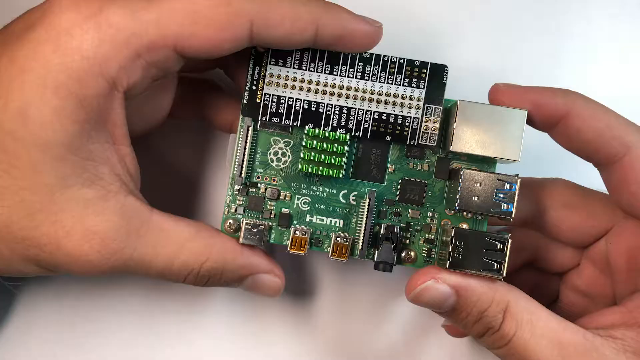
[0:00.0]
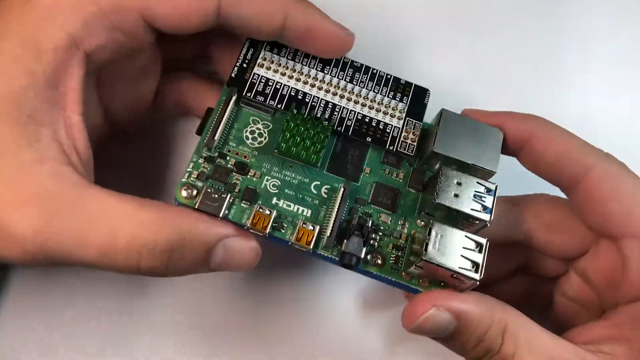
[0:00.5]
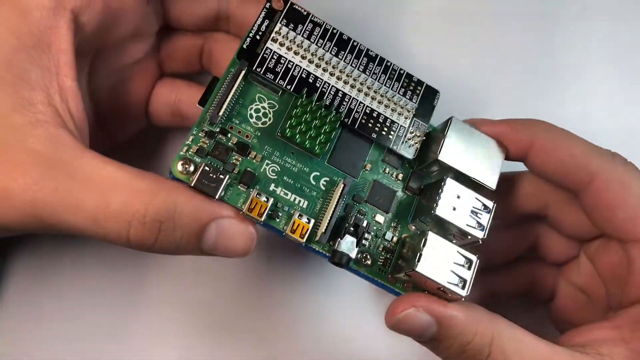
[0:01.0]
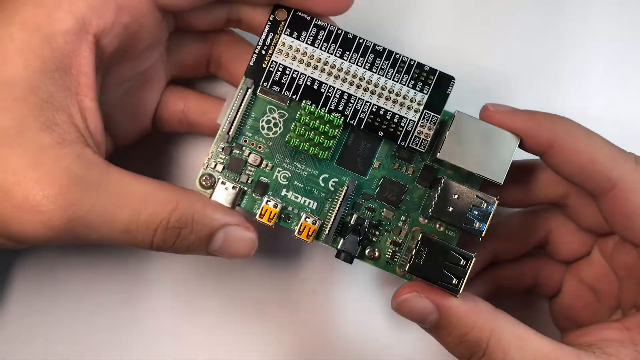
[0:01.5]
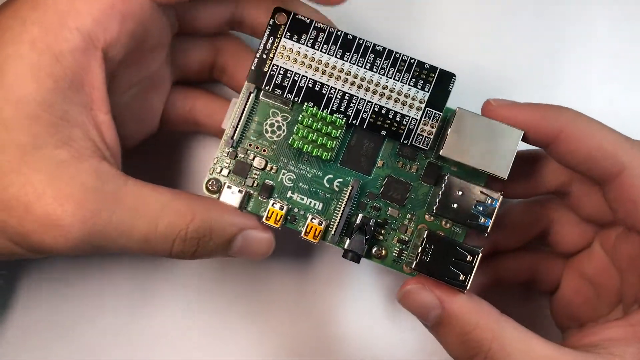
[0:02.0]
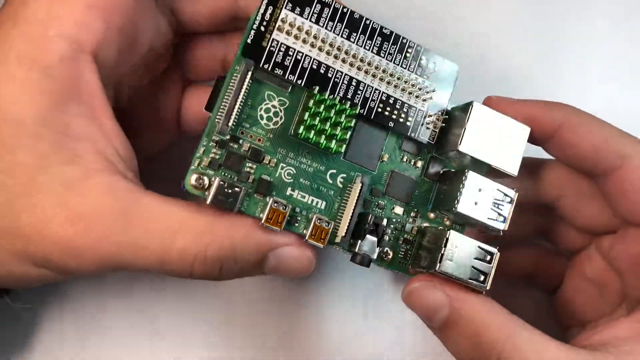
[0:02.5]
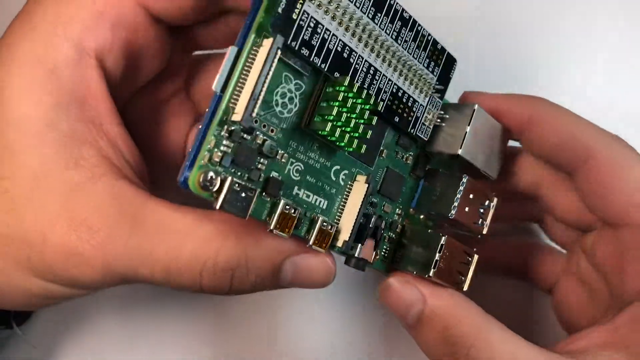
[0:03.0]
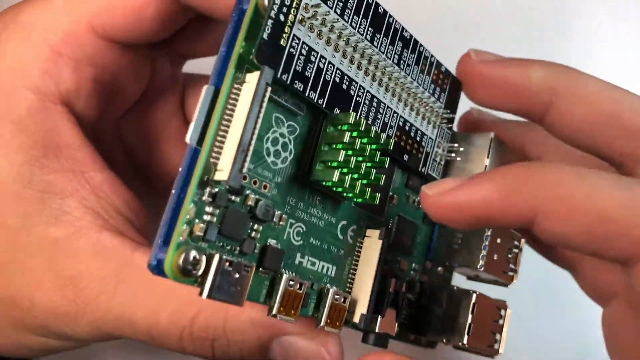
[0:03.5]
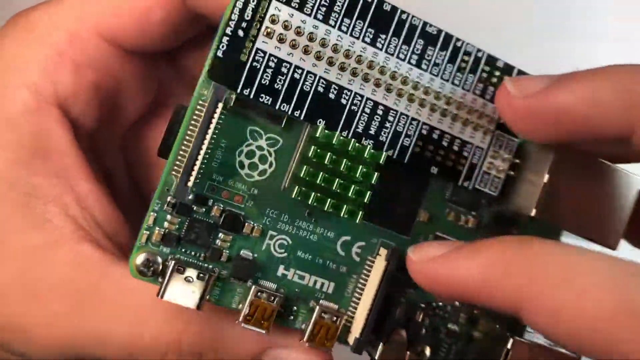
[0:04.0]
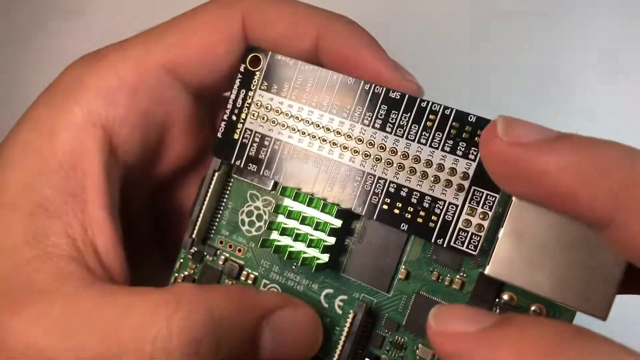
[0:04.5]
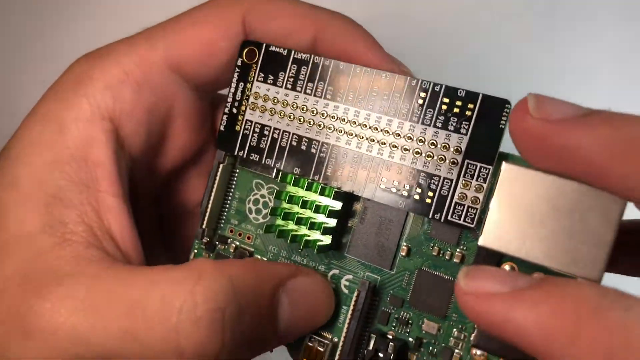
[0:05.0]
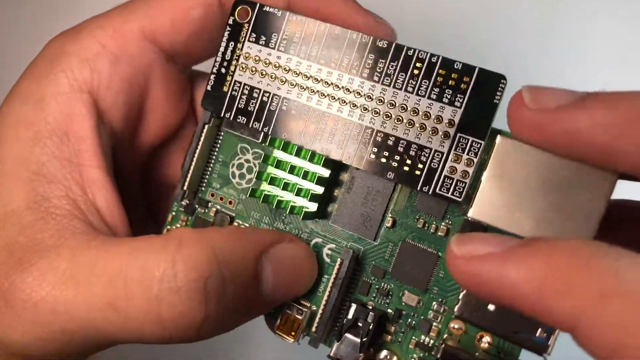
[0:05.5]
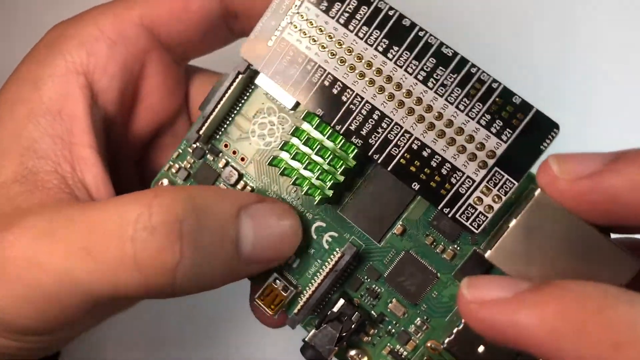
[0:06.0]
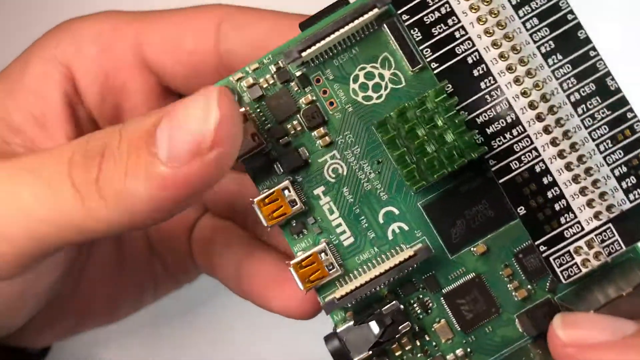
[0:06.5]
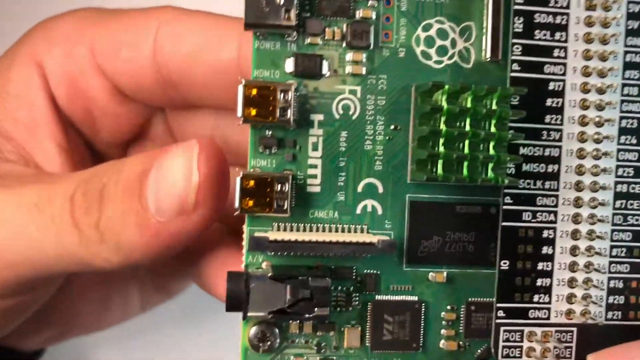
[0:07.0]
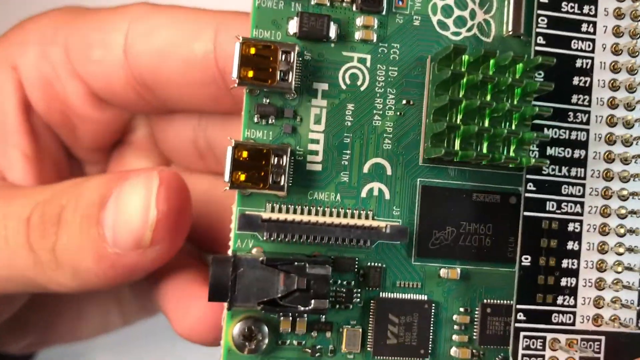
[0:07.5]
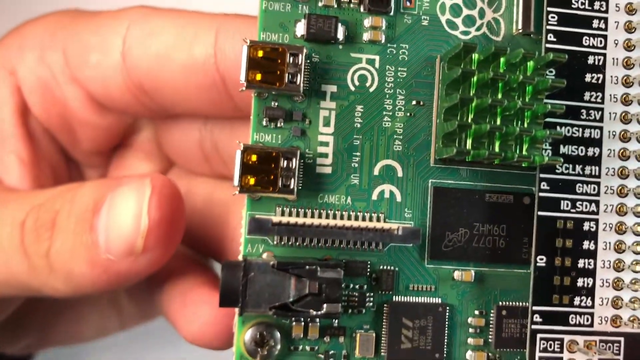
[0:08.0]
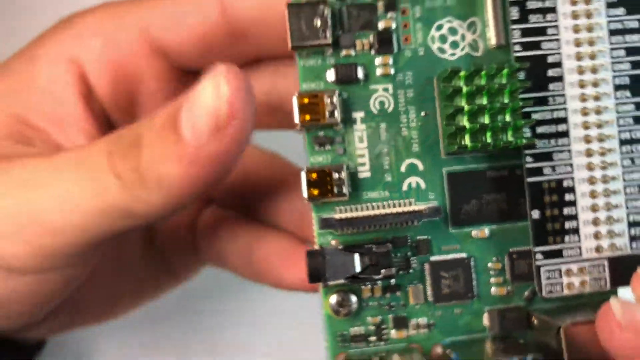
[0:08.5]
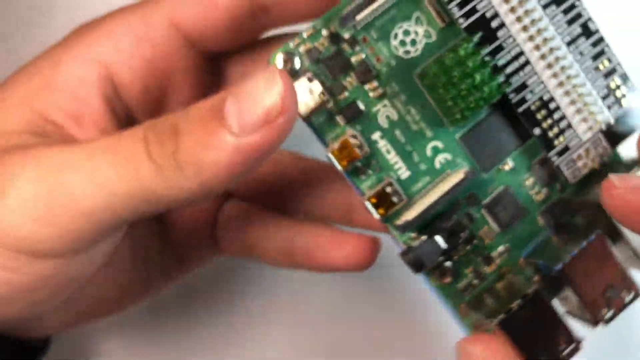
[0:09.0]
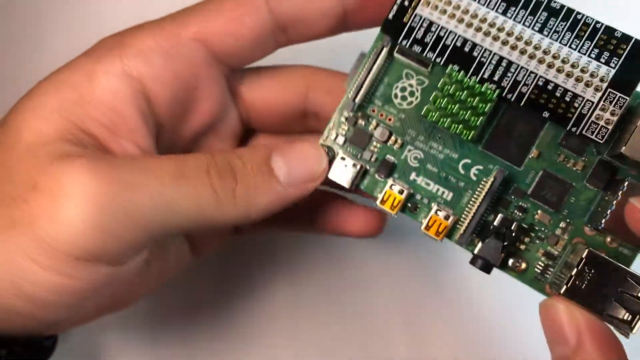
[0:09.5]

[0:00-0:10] Someone holds an electronic circuit board small enough to fit comfortably between the thumb and forefinger. The person holds it with both thumbs and both index fingers, with the other fingers behind the board. The person moves the board closer and lifts it, points with the right index finger to a piece sticking up on the board, then grabs the board into the left hand; the left thumb moves over while the right thumb and finger hold the board. The board is turned so that its black and silver parts are vertical, with the left thumb not touching it, and then it is turned back around.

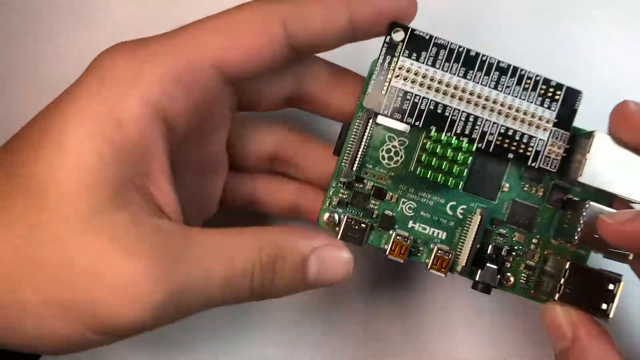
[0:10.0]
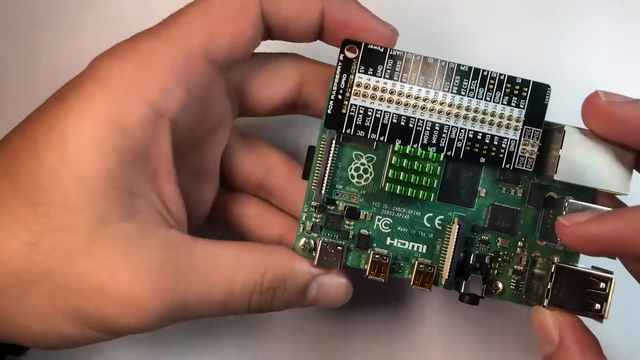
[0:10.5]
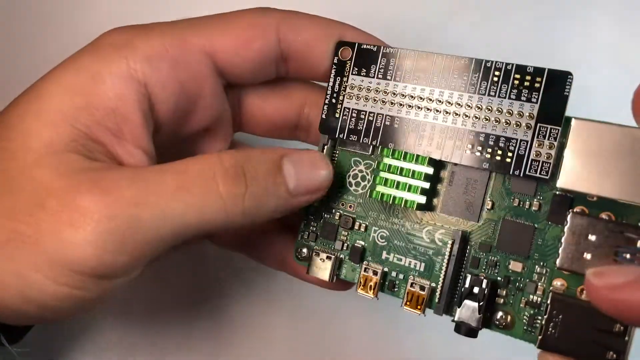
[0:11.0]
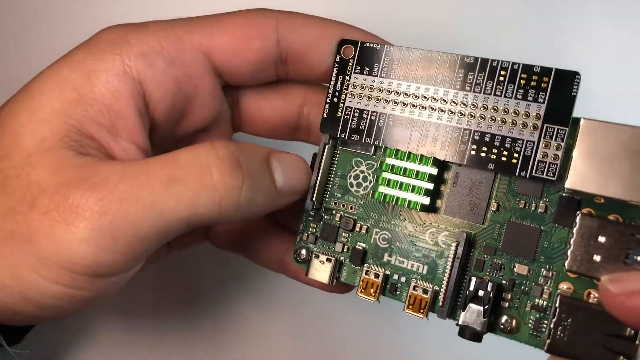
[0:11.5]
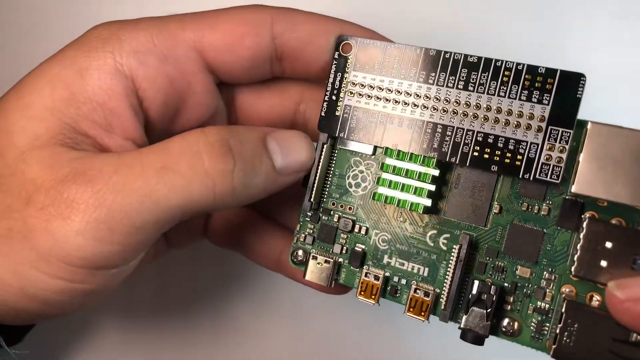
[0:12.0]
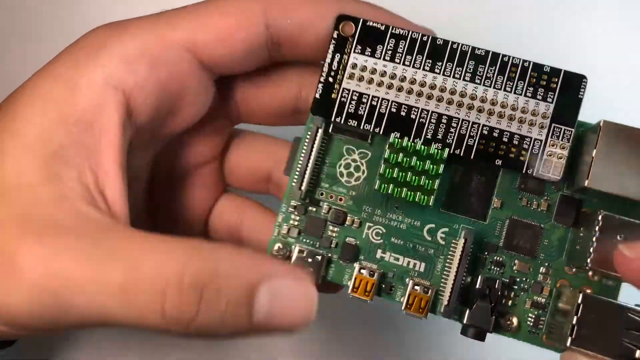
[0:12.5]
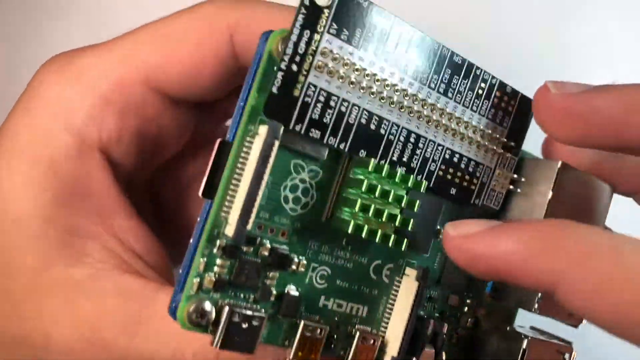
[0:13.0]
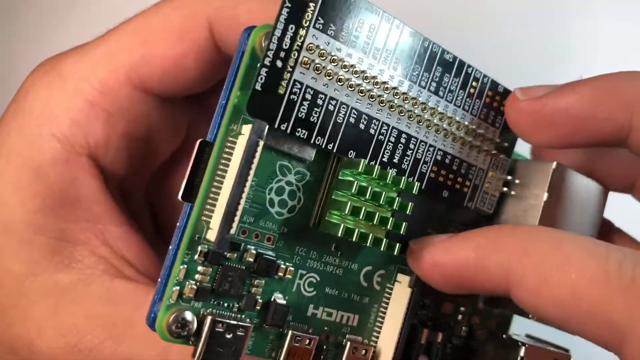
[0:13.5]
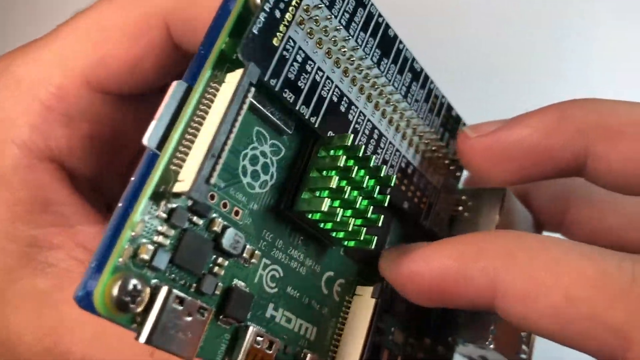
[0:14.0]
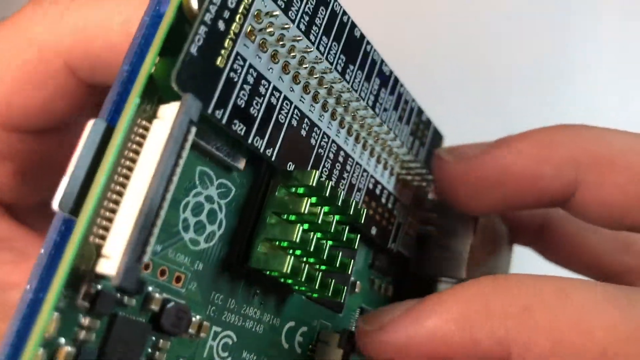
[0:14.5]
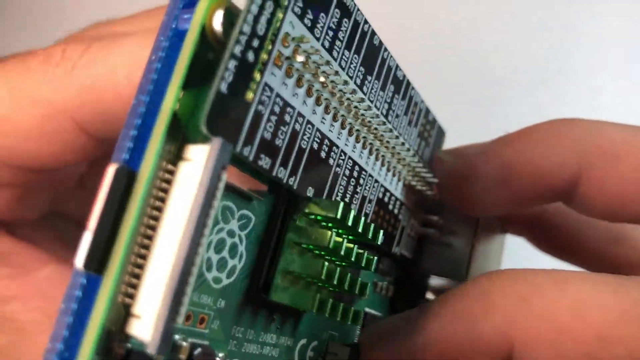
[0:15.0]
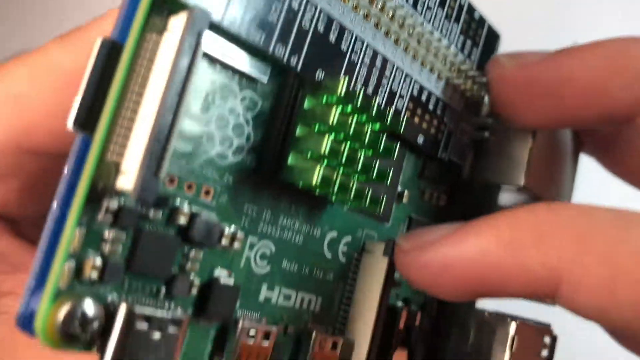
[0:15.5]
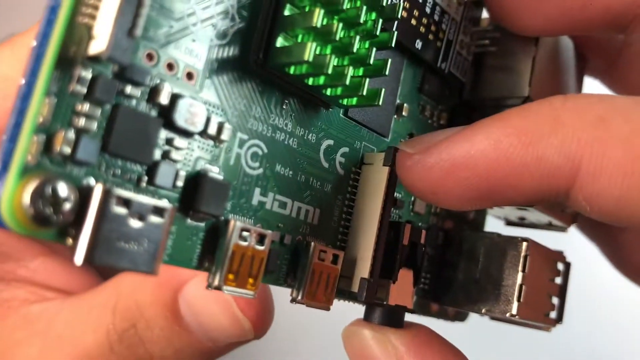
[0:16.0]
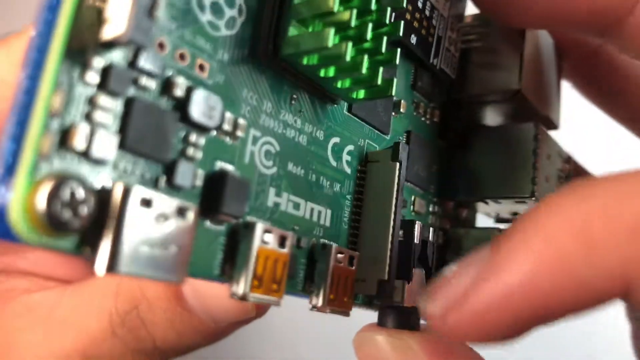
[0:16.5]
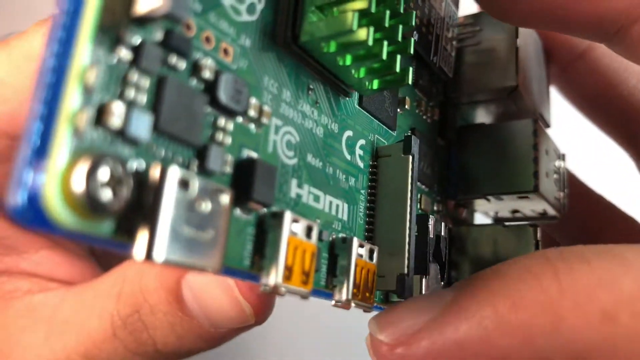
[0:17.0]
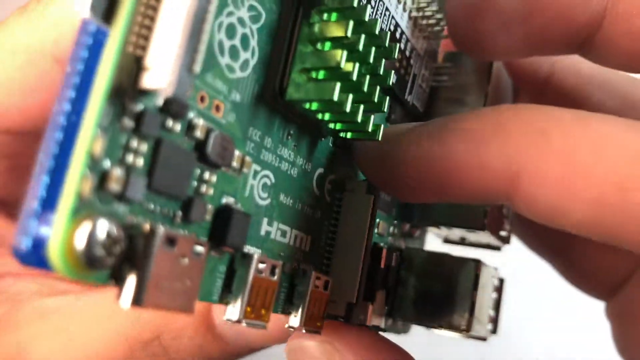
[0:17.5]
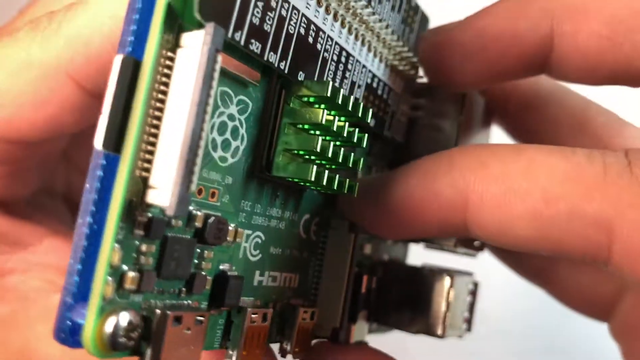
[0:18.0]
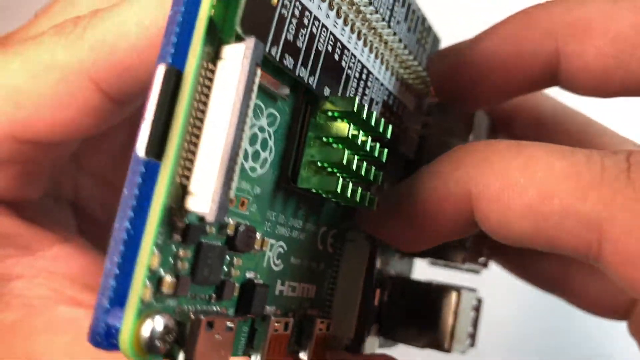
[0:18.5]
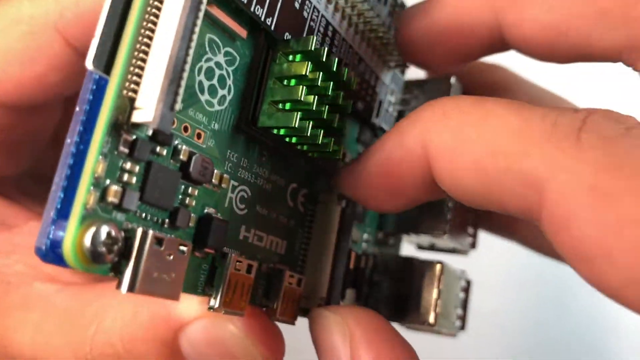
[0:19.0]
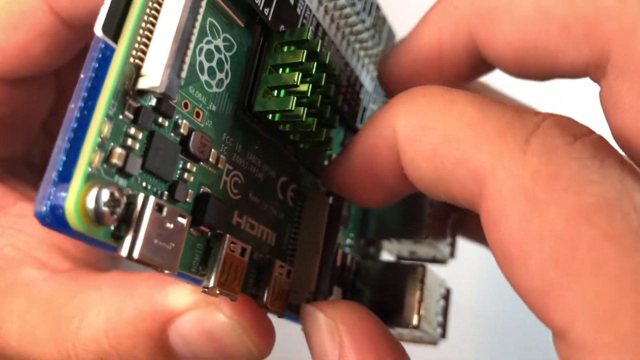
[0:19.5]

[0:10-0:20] A person holds the circuit board between two hands, with an index finger touching an elevated silver box on the board while the left thumb and left index finger hold the board's left edge. The person turns the board at an angle so that its right side is closer to the screen than its left side. The grip then changes so that the index and middle fingers of the right hand are on the board, and the board is raised higher and turned to face the right.